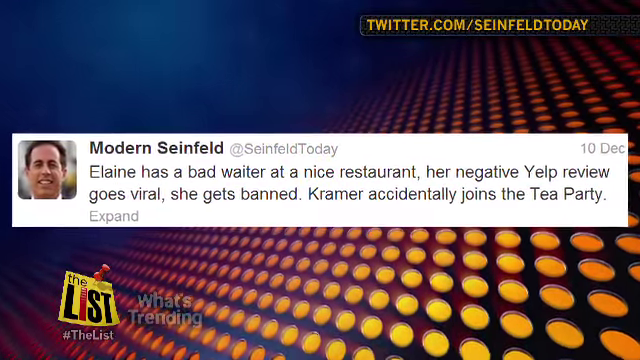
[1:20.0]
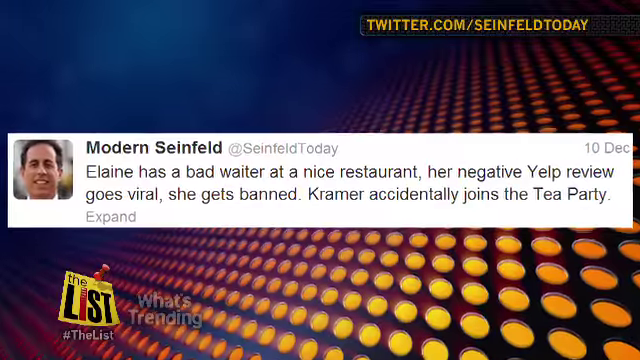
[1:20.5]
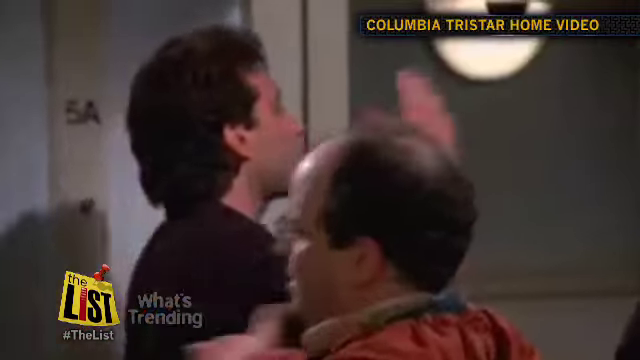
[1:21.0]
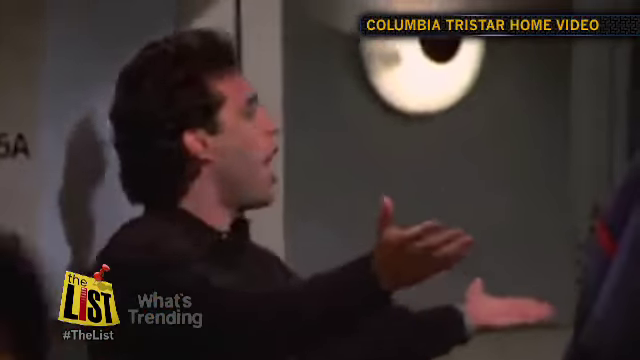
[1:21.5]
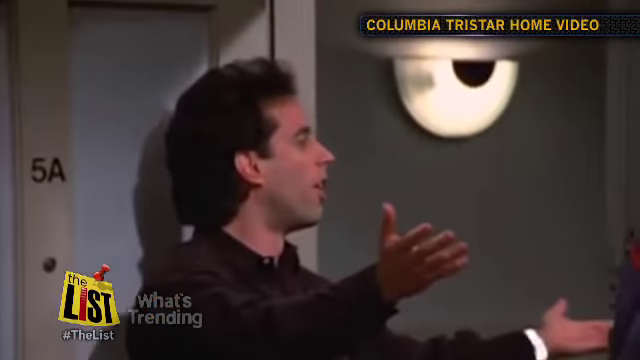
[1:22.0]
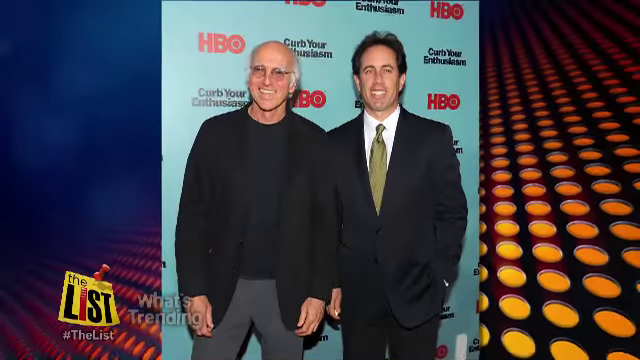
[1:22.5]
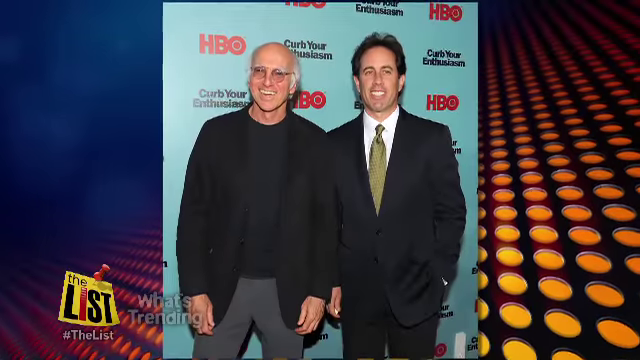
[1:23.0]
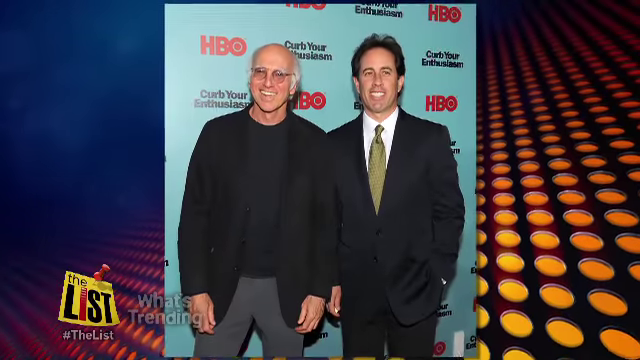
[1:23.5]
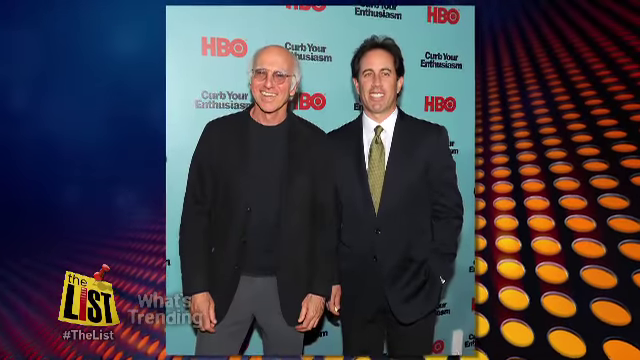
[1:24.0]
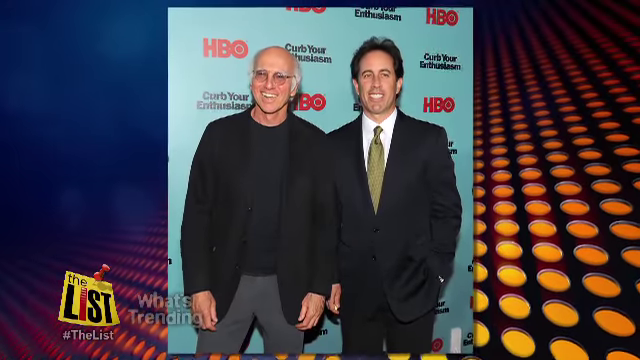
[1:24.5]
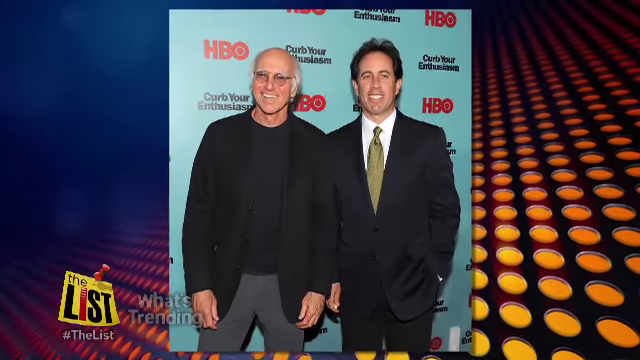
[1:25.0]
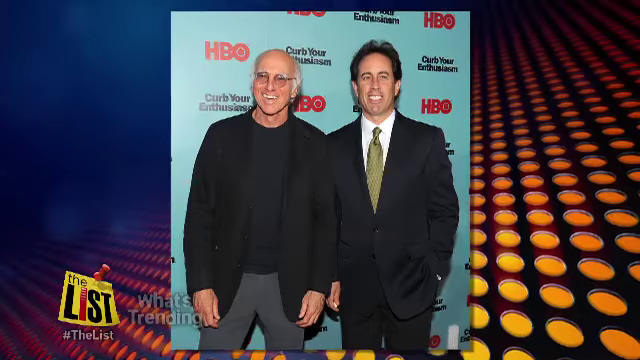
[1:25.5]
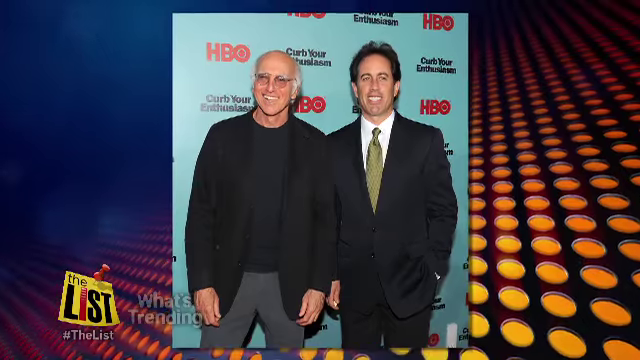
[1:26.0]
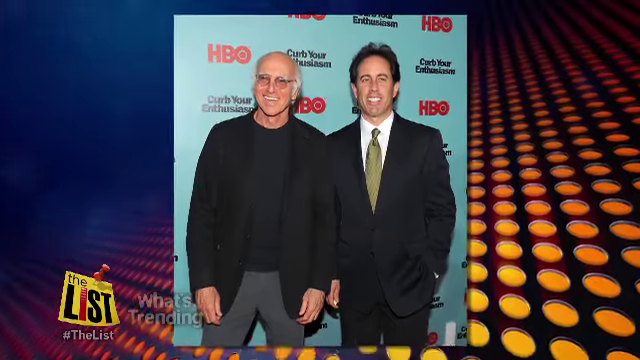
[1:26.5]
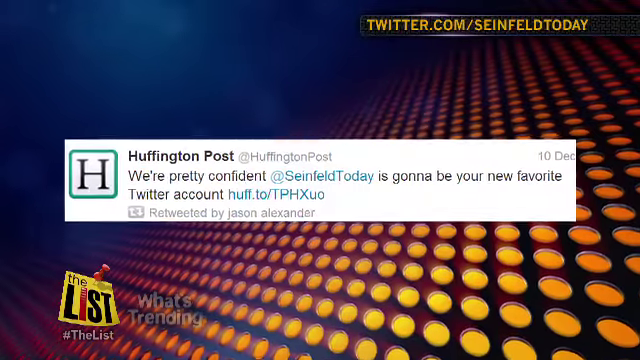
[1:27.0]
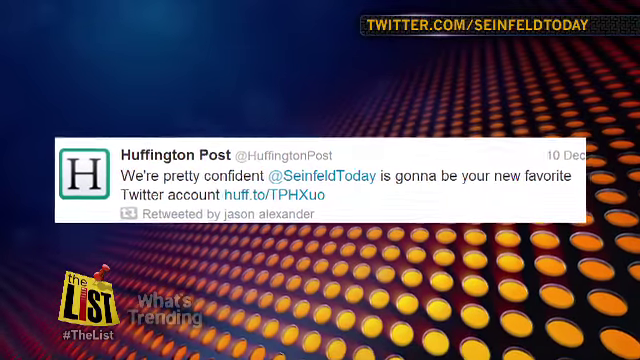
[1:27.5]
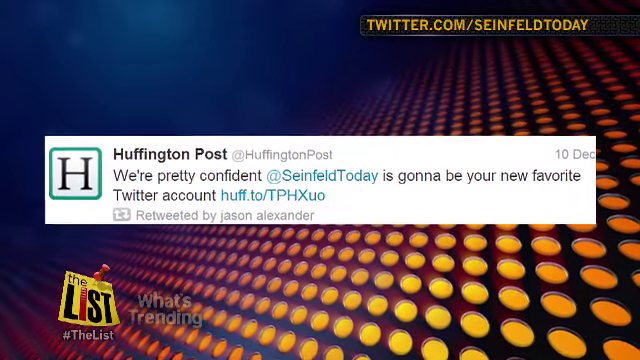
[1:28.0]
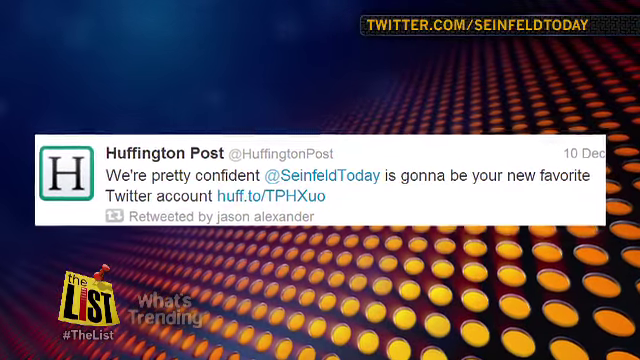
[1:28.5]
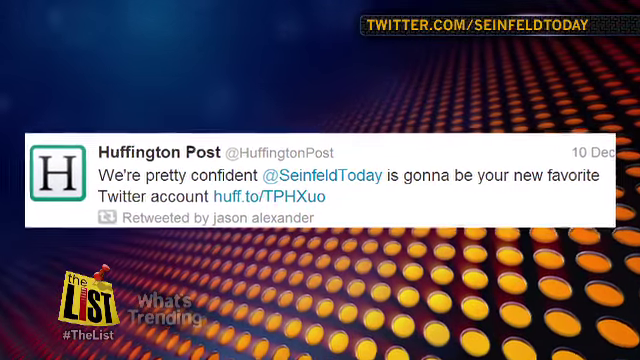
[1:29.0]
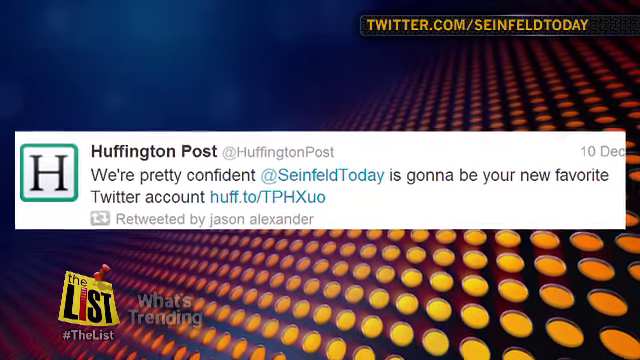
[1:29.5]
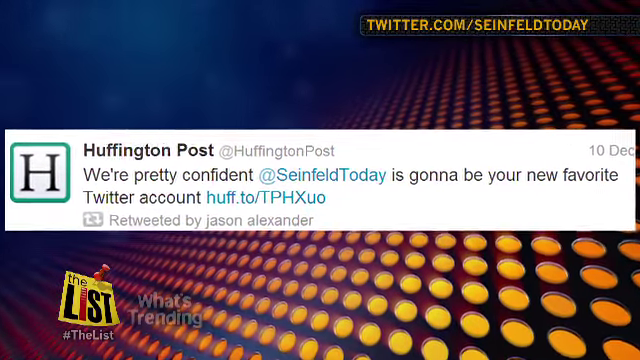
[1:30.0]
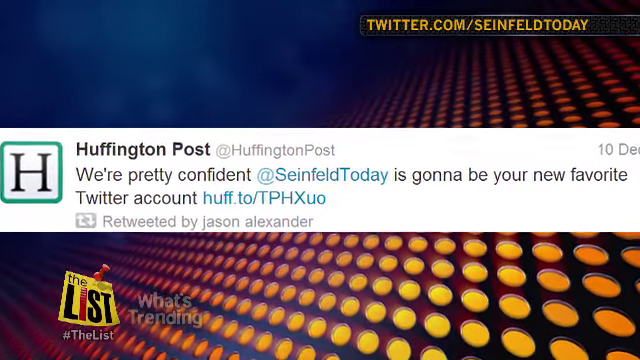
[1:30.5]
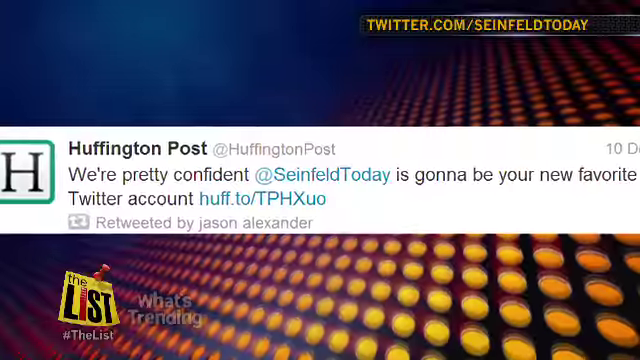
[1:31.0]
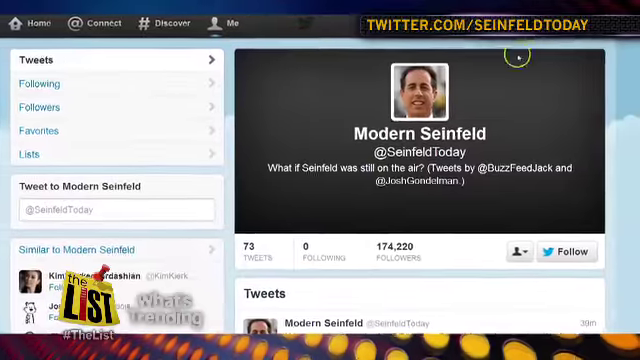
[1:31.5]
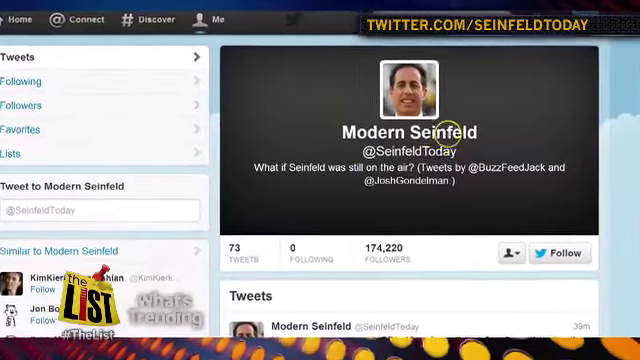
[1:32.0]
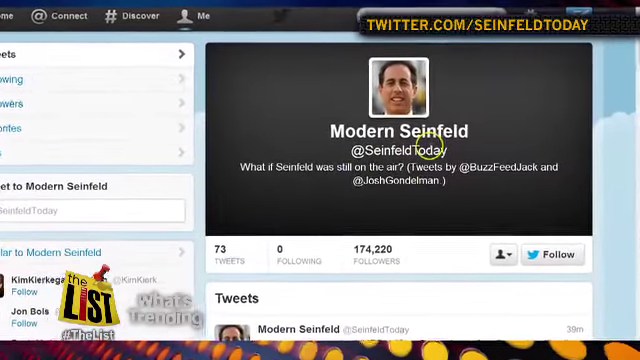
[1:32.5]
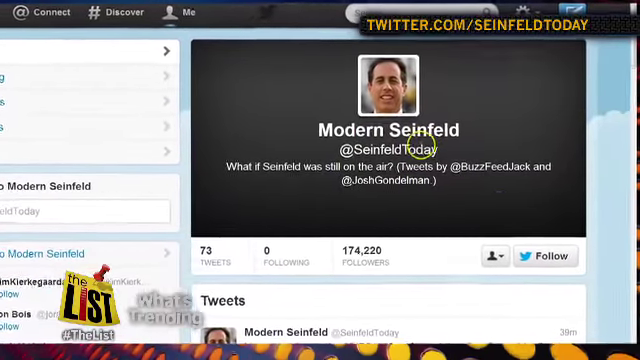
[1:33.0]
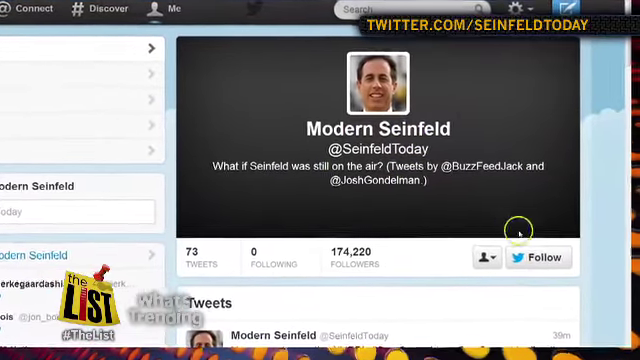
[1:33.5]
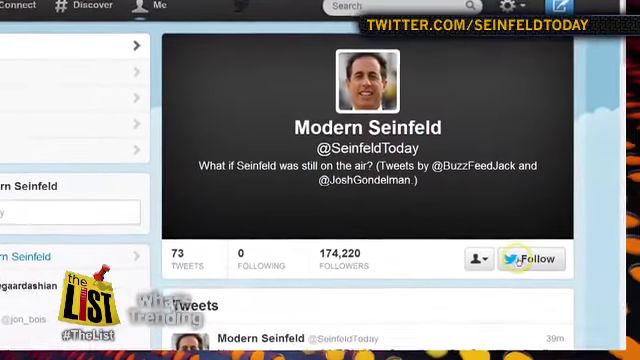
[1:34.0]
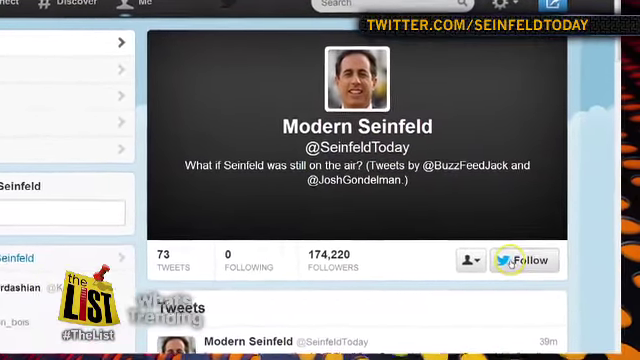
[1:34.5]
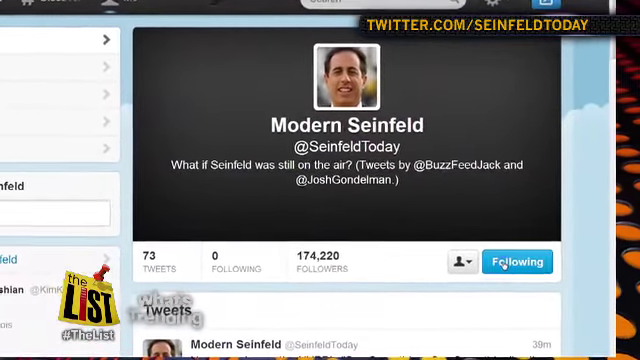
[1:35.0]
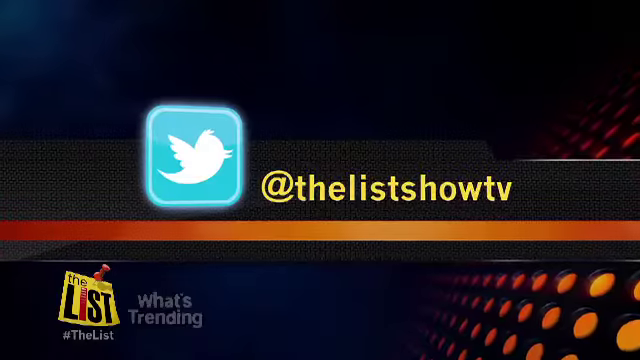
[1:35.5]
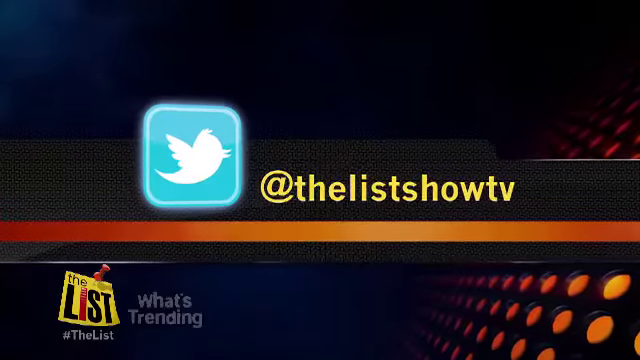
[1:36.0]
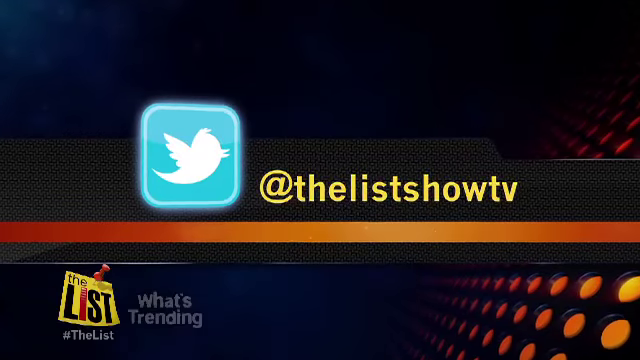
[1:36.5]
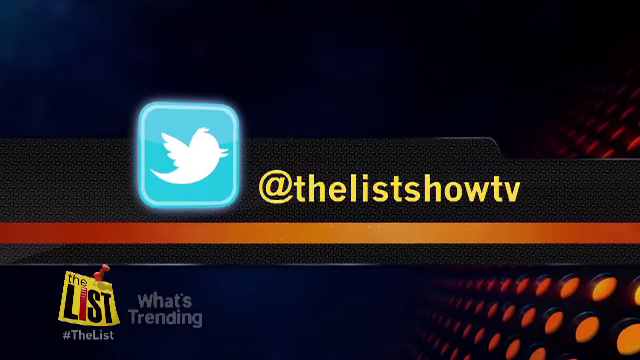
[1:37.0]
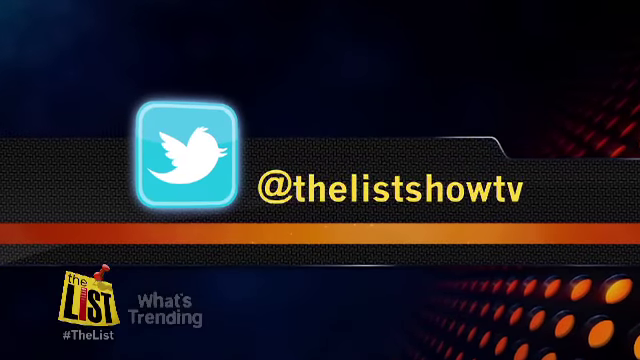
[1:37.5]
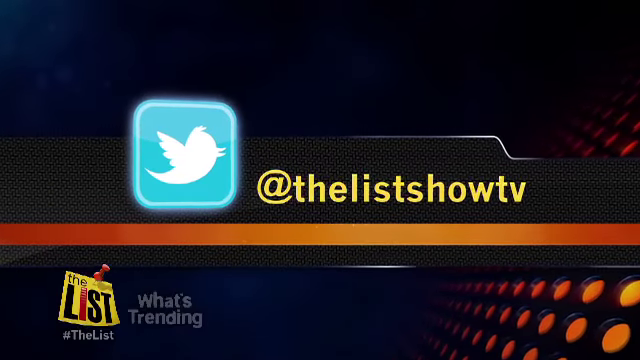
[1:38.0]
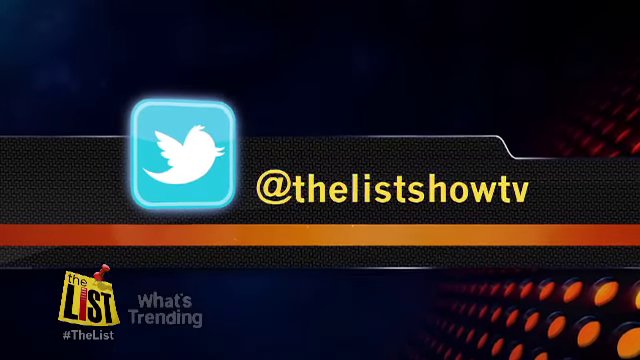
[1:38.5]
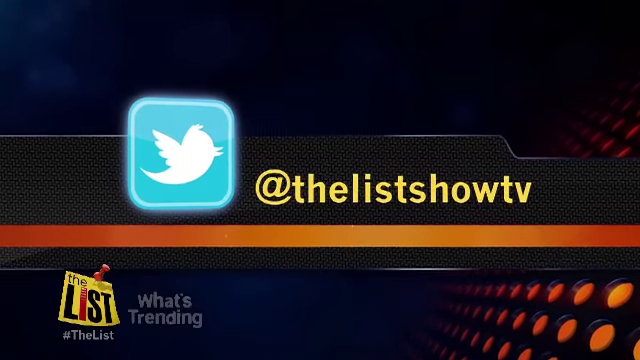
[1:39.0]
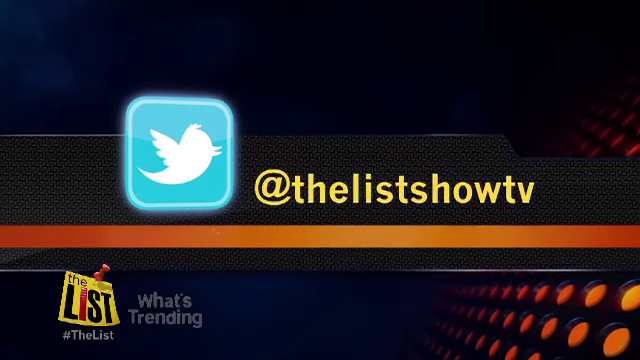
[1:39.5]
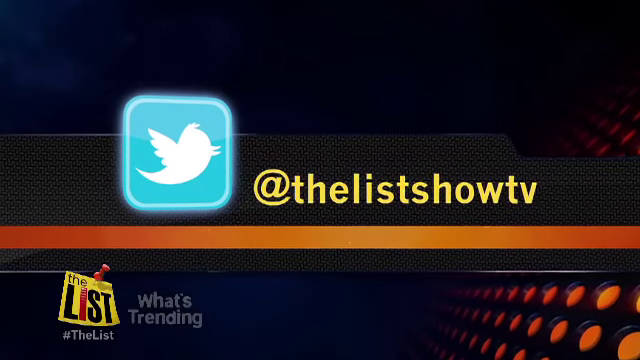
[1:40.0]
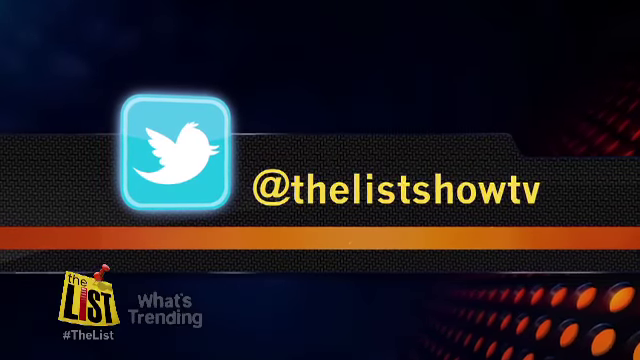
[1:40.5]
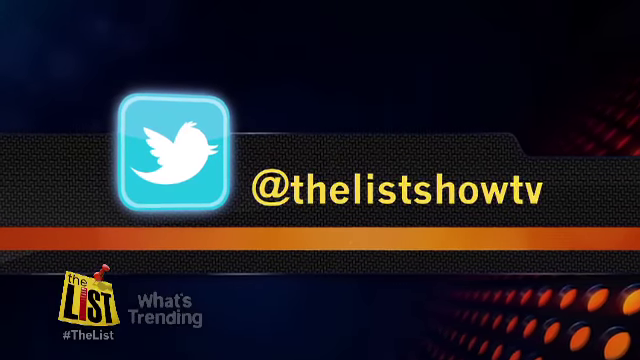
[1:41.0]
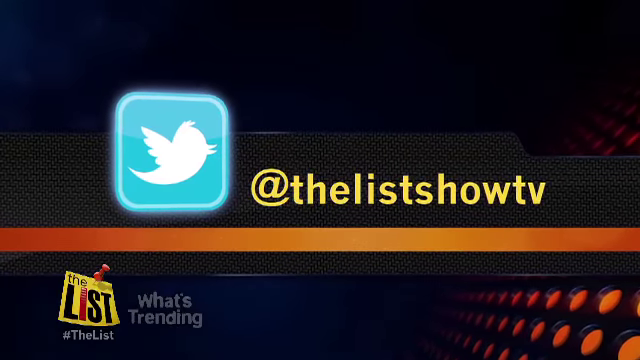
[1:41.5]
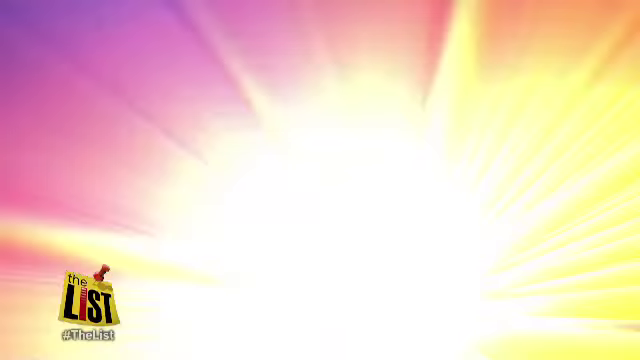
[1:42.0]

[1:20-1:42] A man argues with someone in his room. Next comes an HBO poster with two male actors and the words "Curb Your Enthusiasm." One actor wears a black suit with a white shirt and a green tie; the other wears gray pants, a black jacket and a navy t-shirt. They are smiling as they stand, looking like they are posing for a picture. Another tweet follows, beginning "We are pretty confident" and saying the account "is gonna be your new favorite Twitter account," marked "Retweeted by Jason Alexander." The Modern Seinfeld Twitter page is shown, then someone following the list and the Twitter handle.